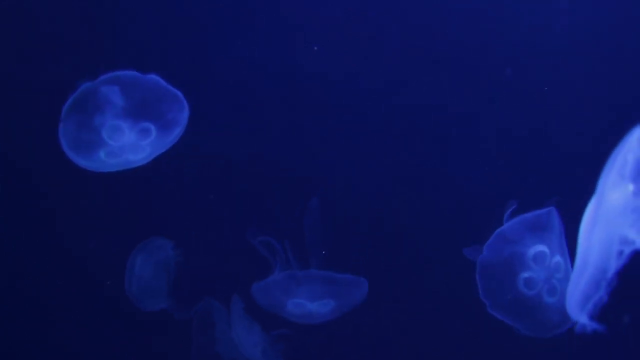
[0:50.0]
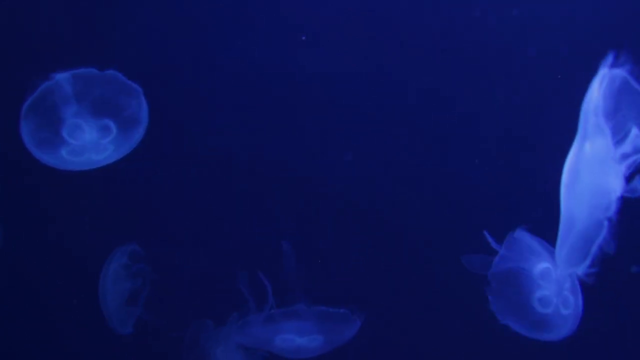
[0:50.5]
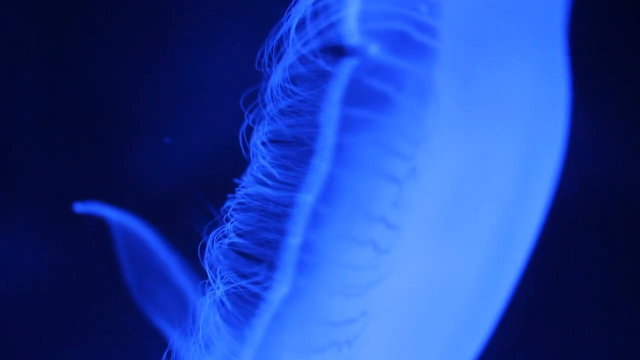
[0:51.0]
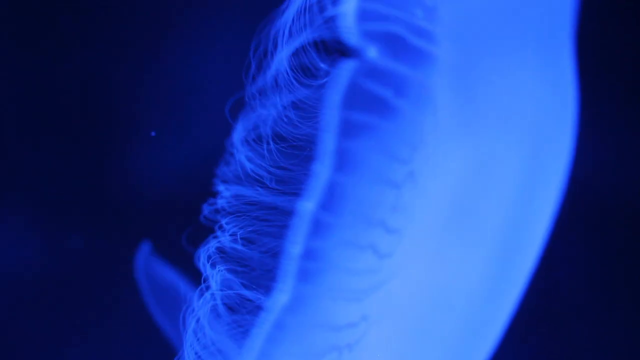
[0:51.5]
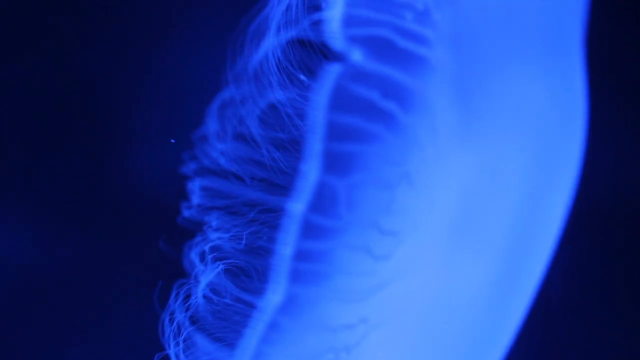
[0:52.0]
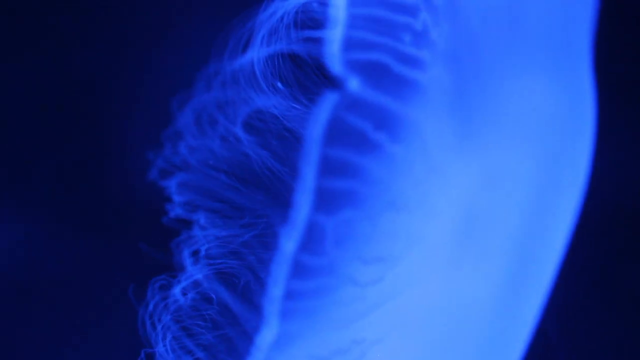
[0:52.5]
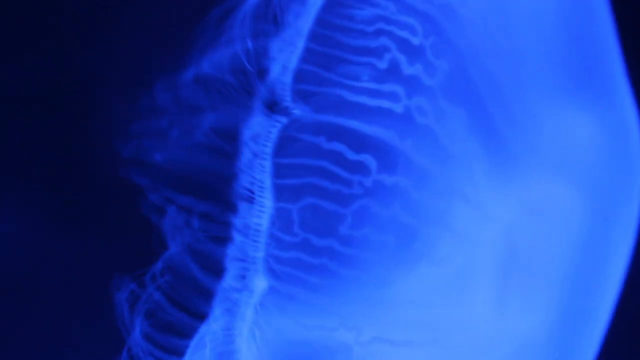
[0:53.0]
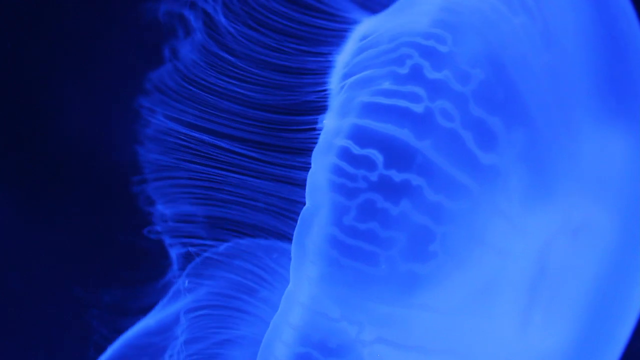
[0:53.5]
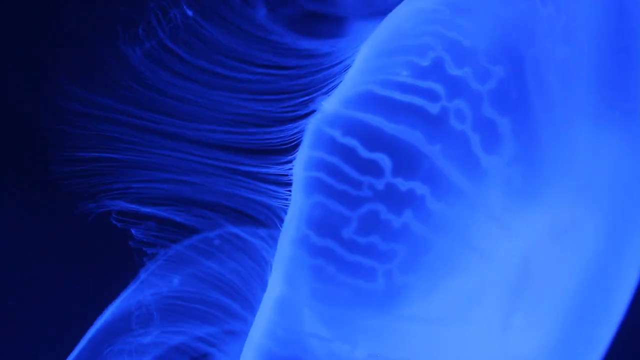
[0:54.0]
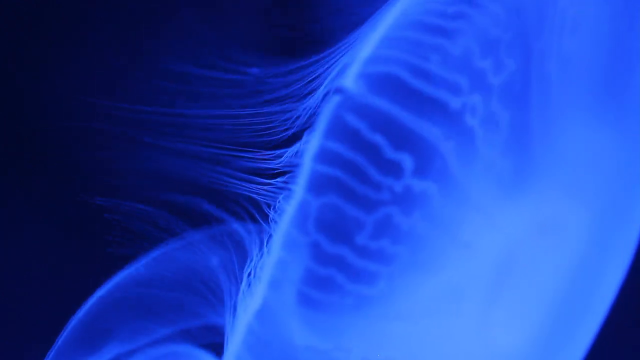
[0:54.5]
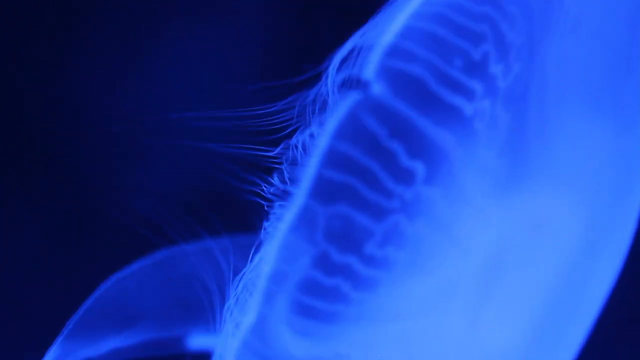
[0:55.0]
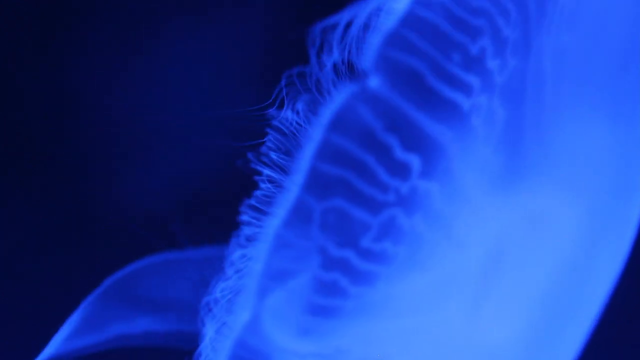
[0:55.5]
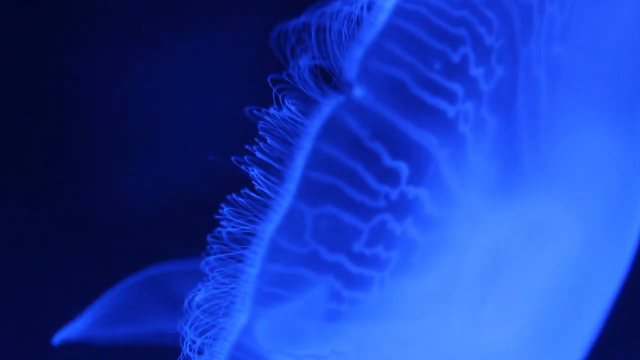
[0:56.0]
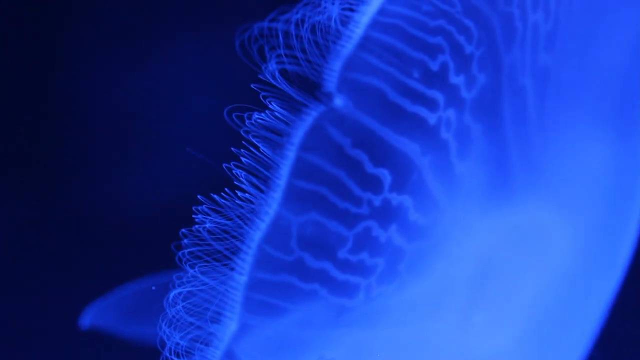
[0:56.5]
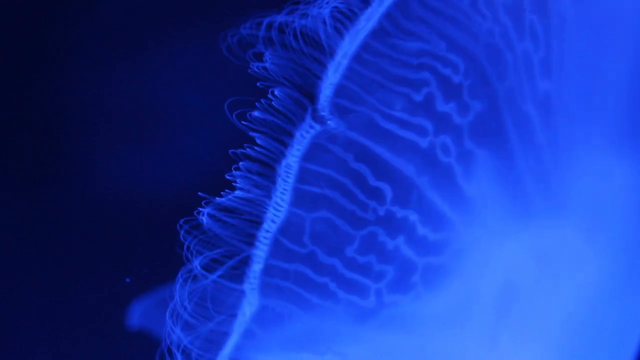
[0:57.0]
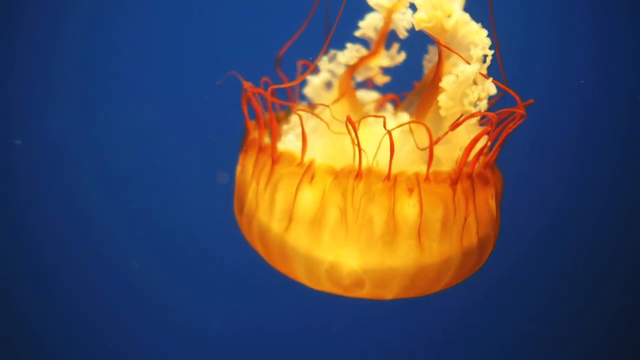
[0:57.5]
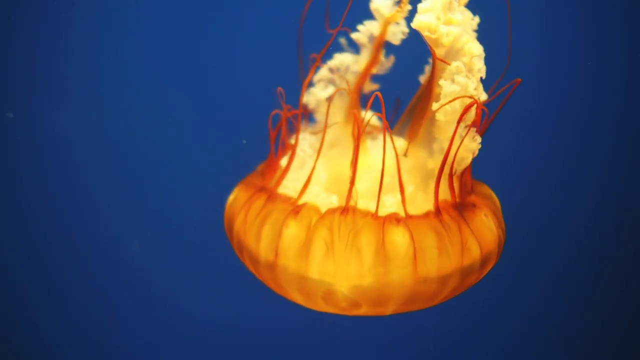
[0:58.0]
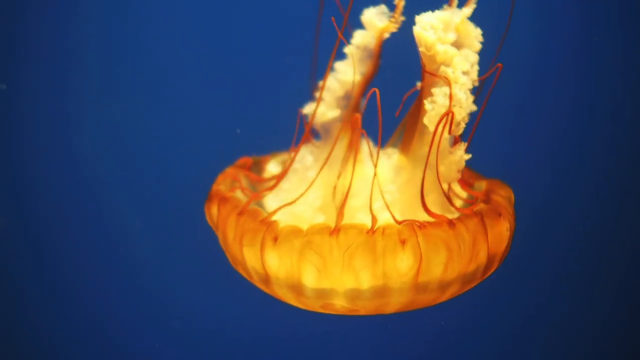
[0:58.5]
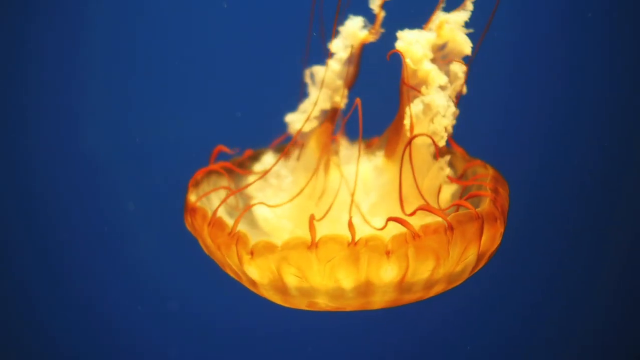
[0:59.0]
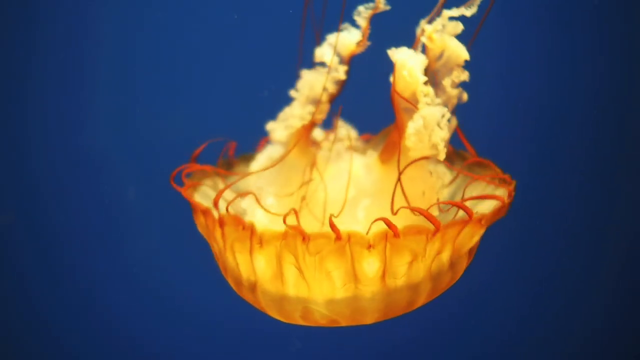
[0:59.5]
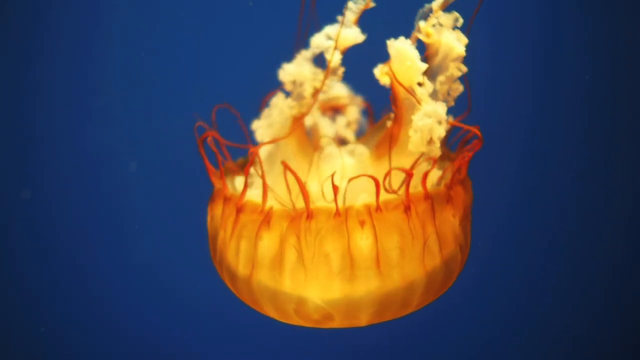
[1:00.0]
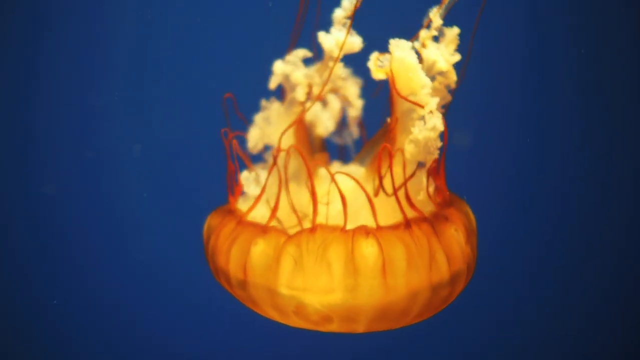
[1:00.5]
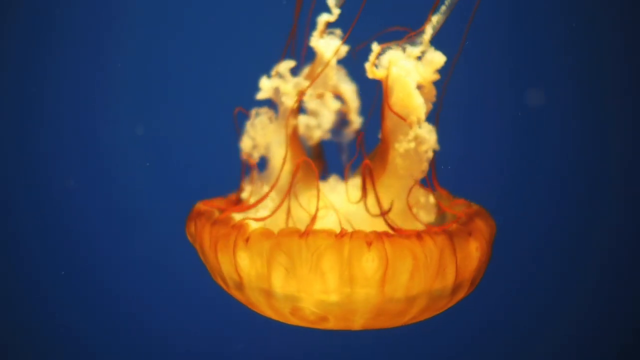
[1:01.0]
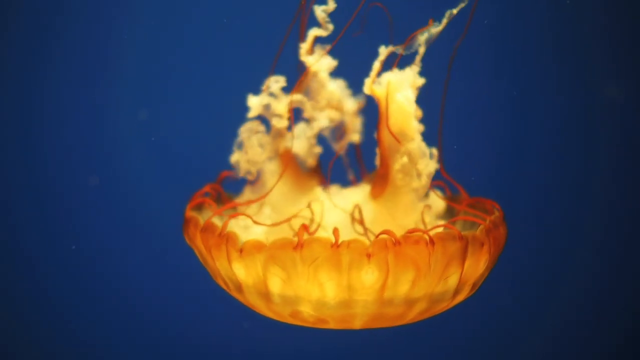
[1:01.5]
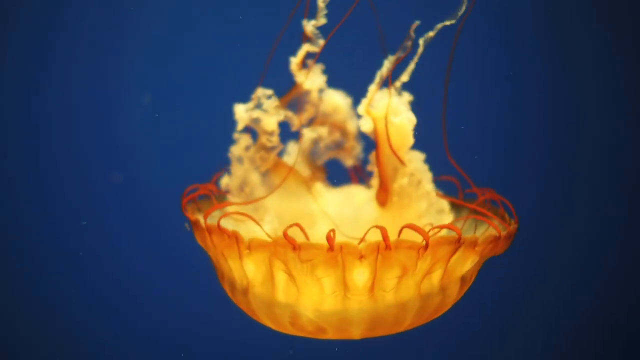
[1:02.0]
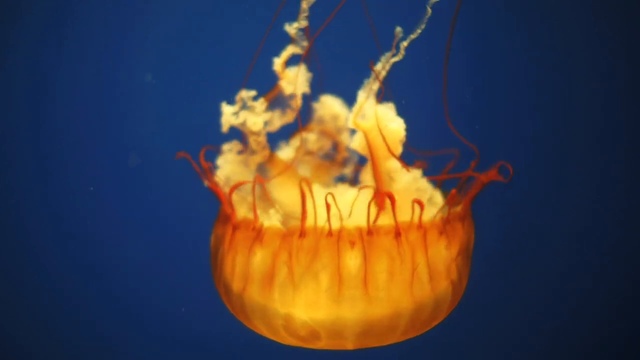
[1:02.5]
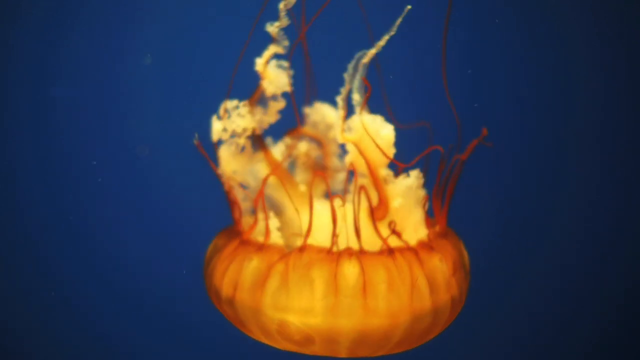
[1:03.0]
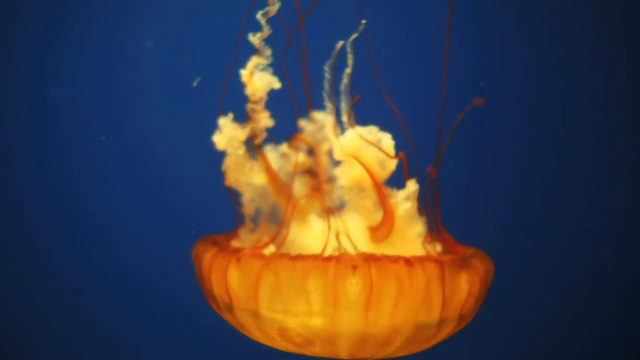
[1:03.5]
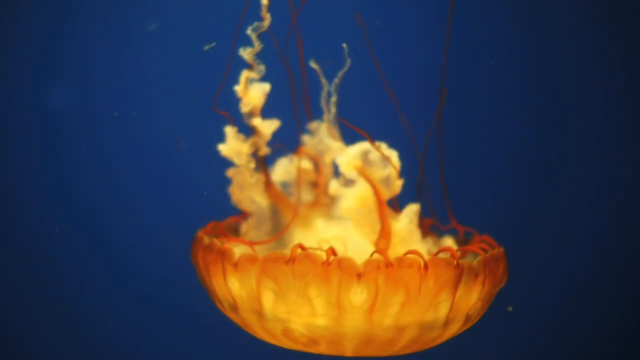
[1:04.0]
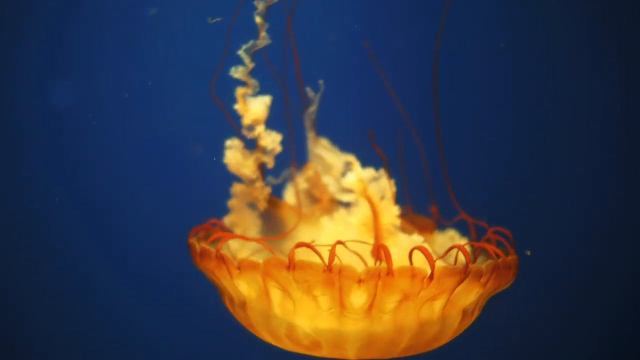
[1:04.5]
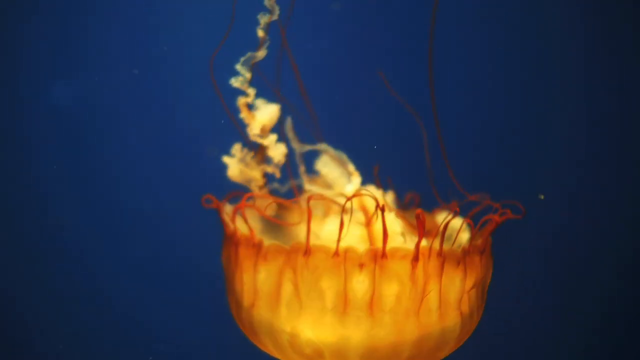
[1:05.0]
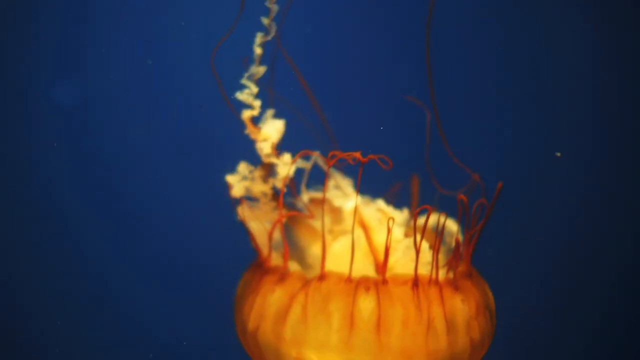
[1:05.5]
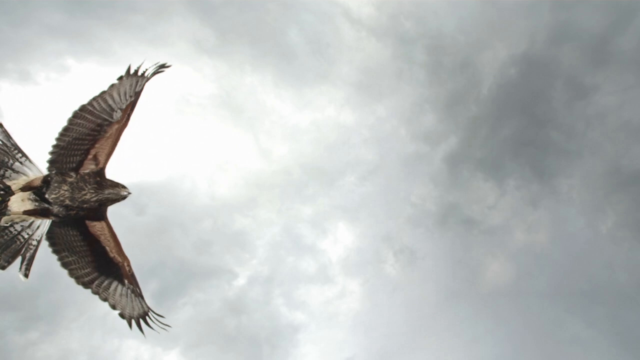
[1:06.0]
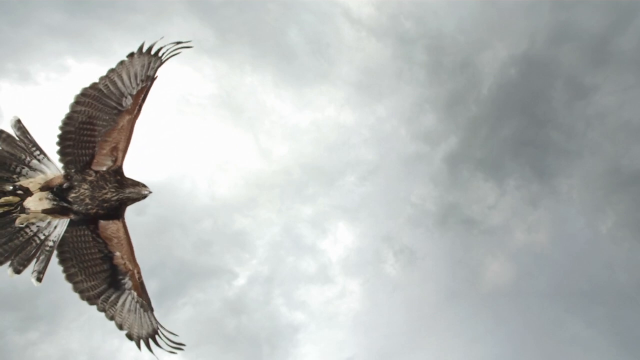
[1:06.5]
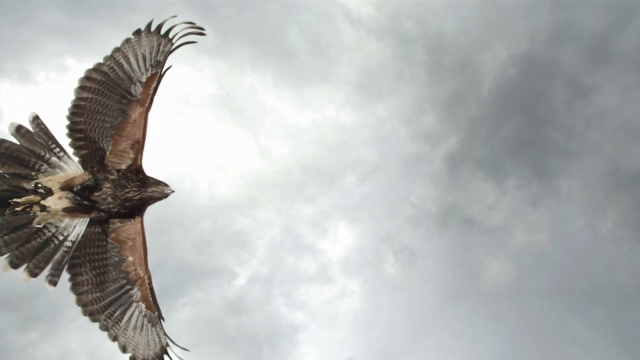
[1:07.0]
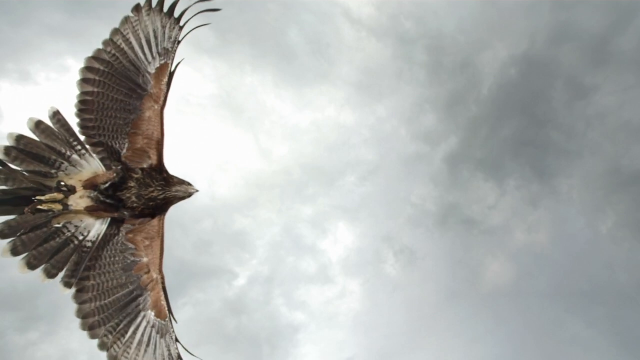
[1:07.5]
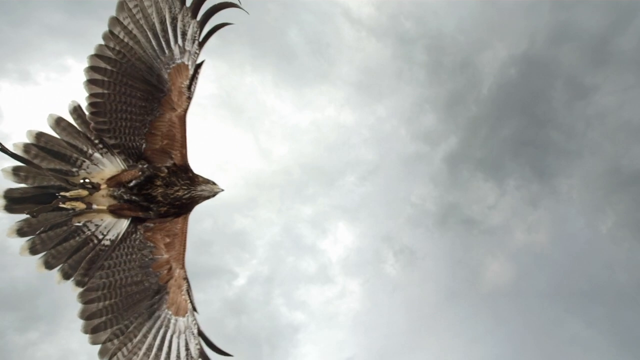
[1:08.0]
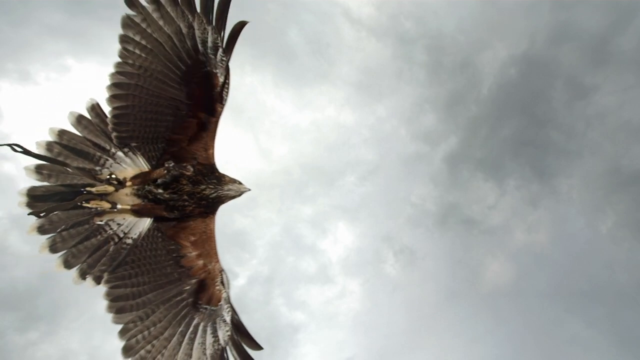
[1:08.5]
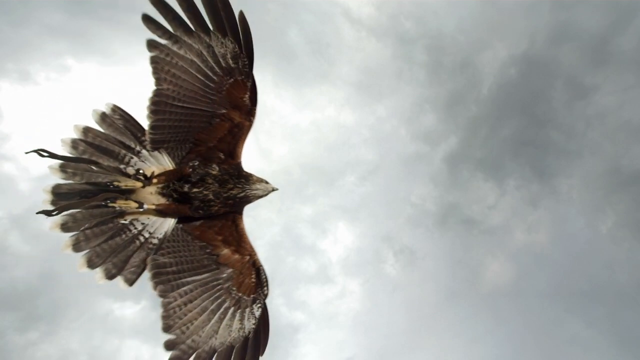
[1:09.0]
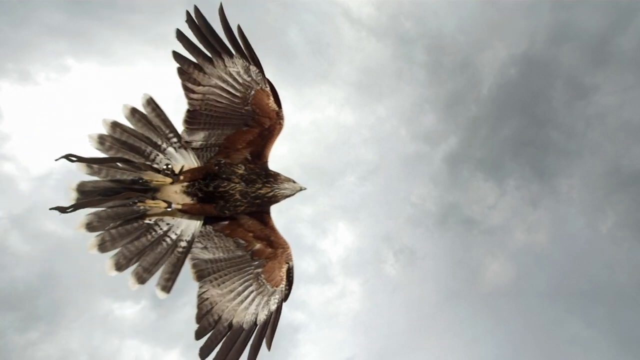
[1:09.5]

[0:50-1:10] Blue jellyfish swim in the deep ocean, glowing light blue against the deep blue of the sea. After a few moments the camera cuts to another angle of apparently the same jellyfish, showing closer detail along the edge of the dome, where cilia move in a fan-like motion as the jellyfish undulates and swims. The video then cuts to a different kind of jellyfish, orange and yellow against the deep blue of the sea. Its dome points downward as it swims deeper; reddish tentacles come off the sides of the dome, and trailing tentacles look almost like popcorn. The orange-red frills of tentacle along the edges move in tandem with the jellyfish's undulation, while the popcorn-colored trailing tentacles do not move as much. It keeps swimming until it is off frame. A cut leads to an overcast sky, with the camera looking up as a hawk or eagle flies overhead and begins to move across the frame, flapping its wings.